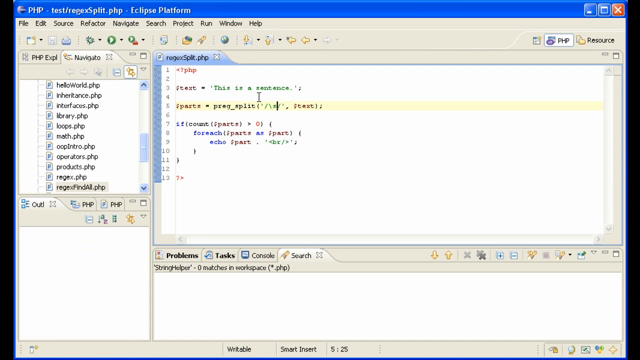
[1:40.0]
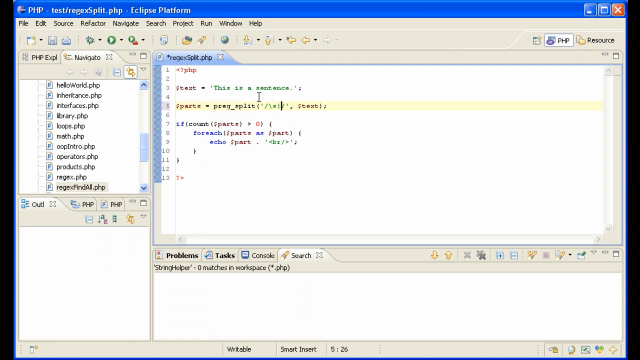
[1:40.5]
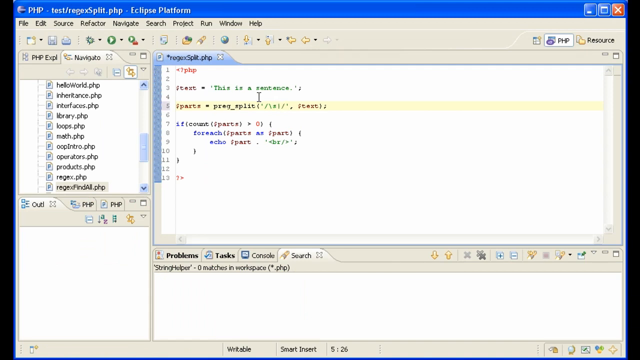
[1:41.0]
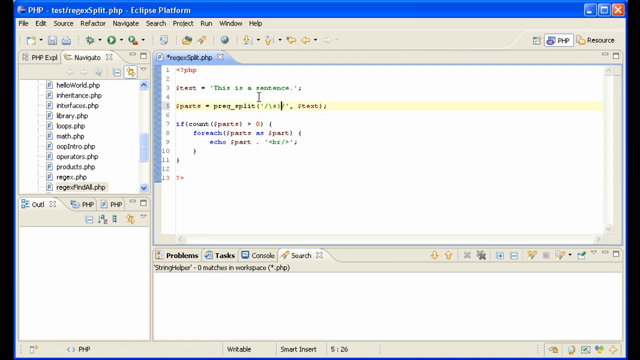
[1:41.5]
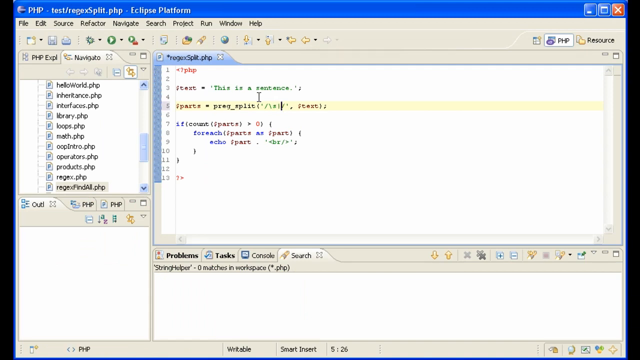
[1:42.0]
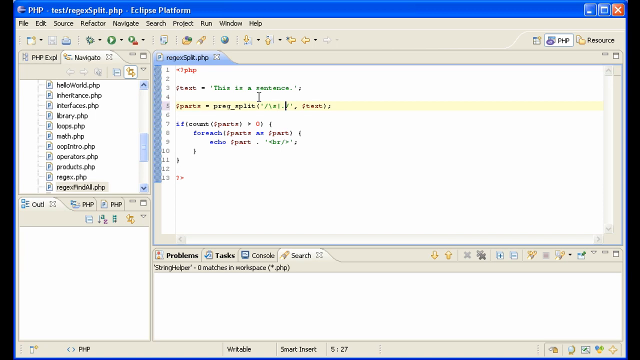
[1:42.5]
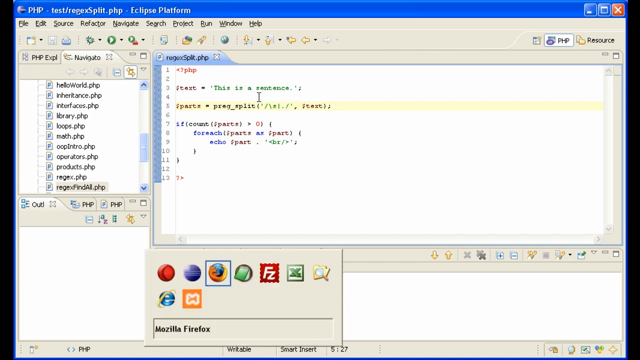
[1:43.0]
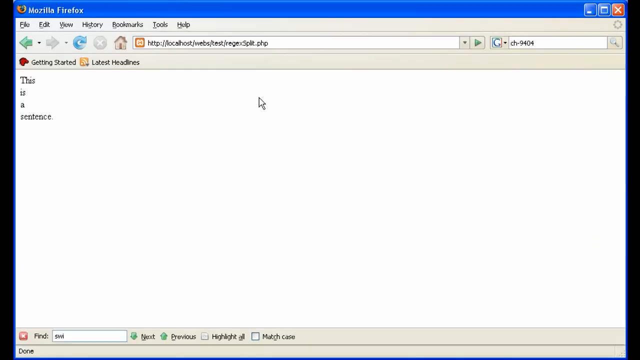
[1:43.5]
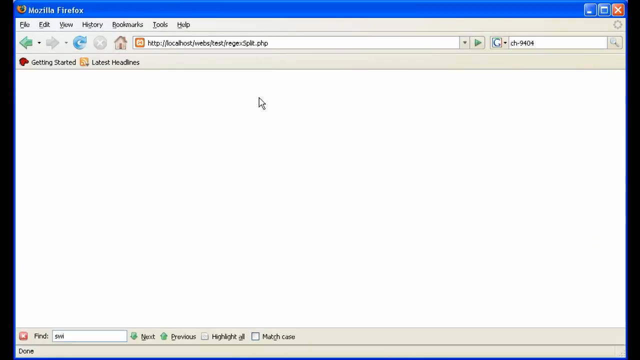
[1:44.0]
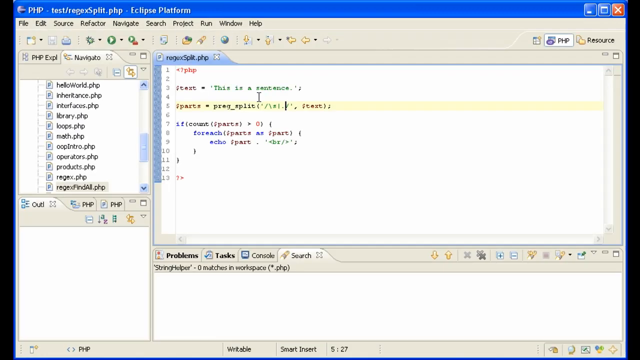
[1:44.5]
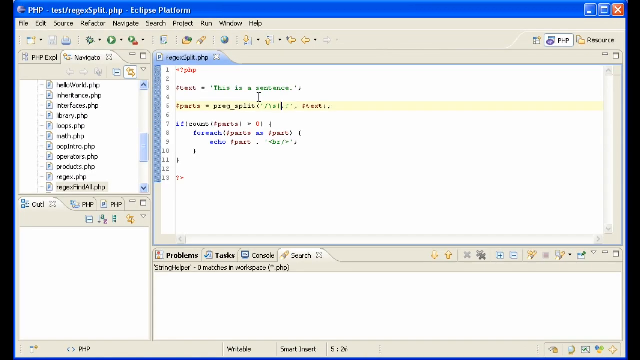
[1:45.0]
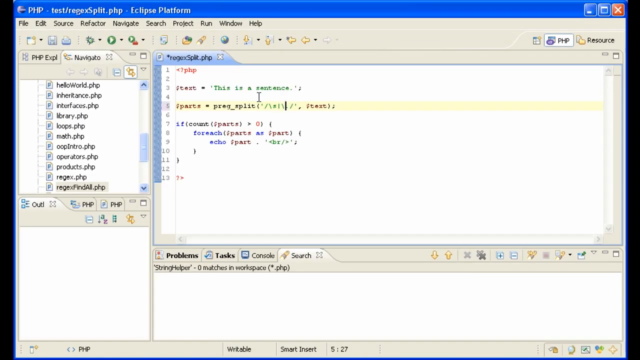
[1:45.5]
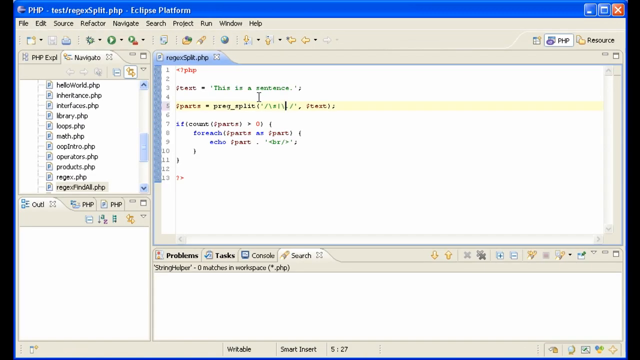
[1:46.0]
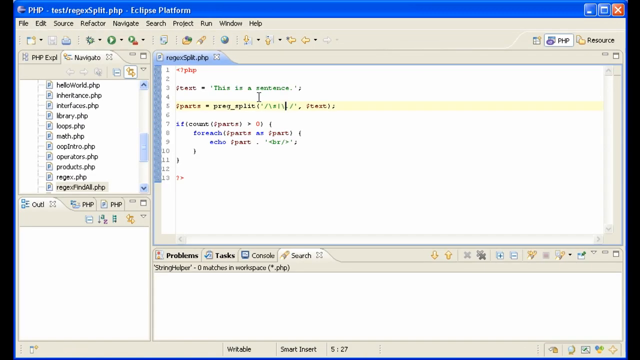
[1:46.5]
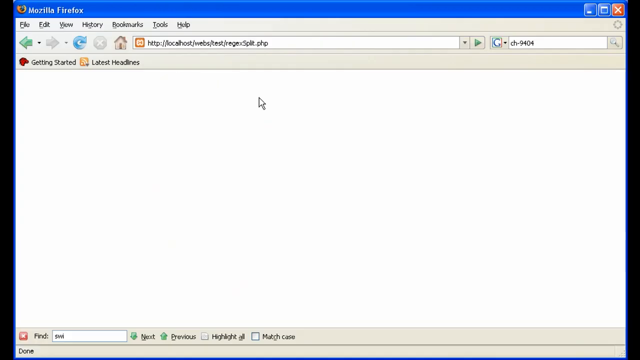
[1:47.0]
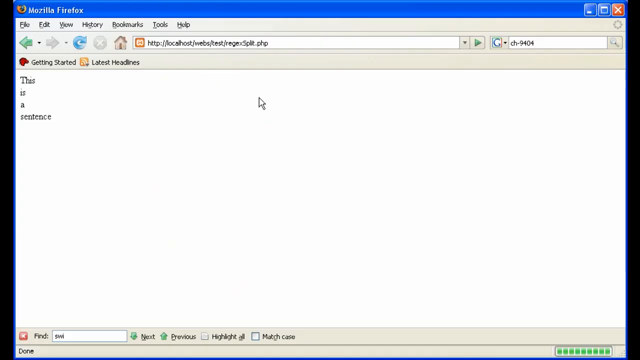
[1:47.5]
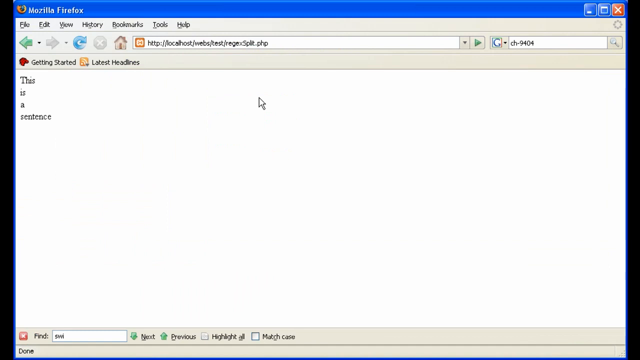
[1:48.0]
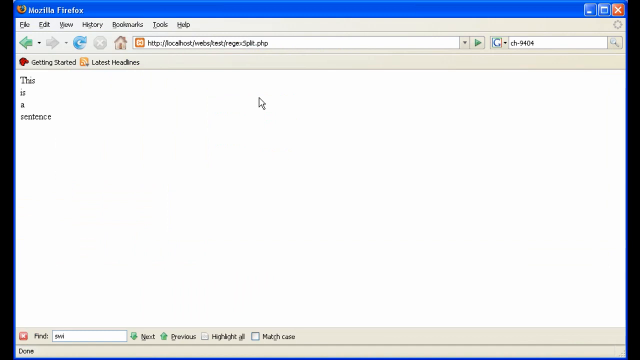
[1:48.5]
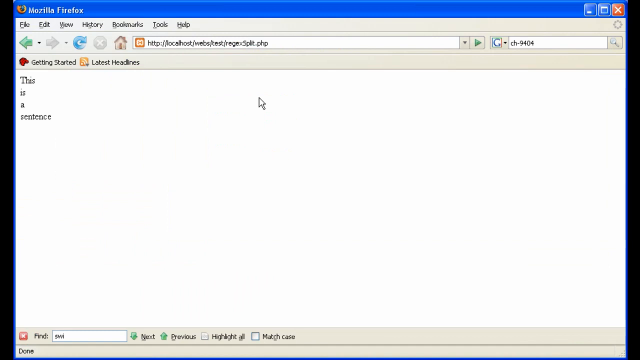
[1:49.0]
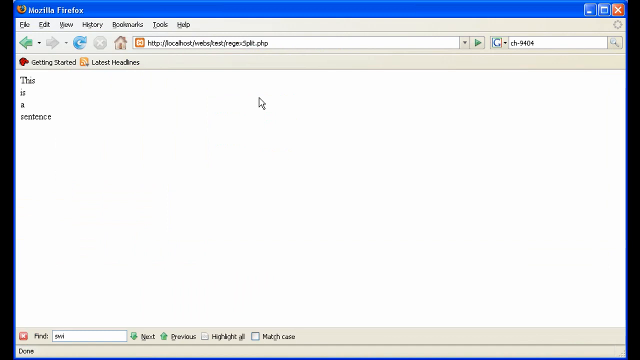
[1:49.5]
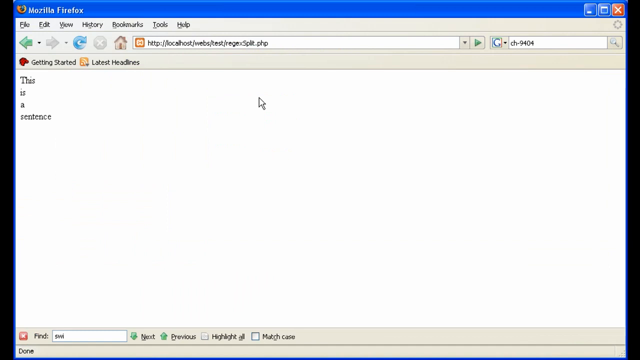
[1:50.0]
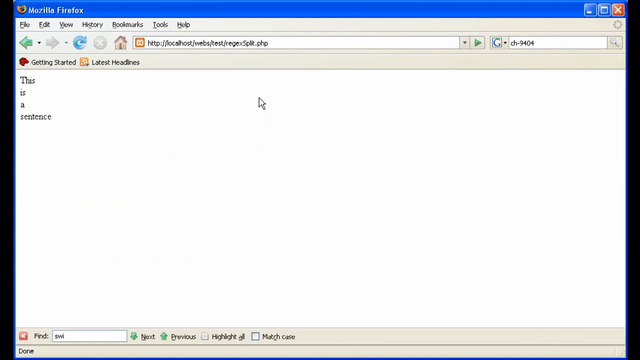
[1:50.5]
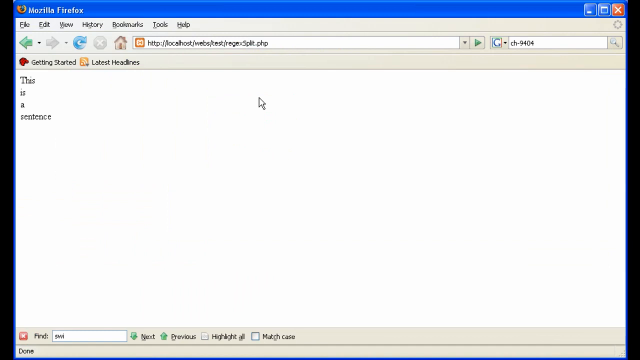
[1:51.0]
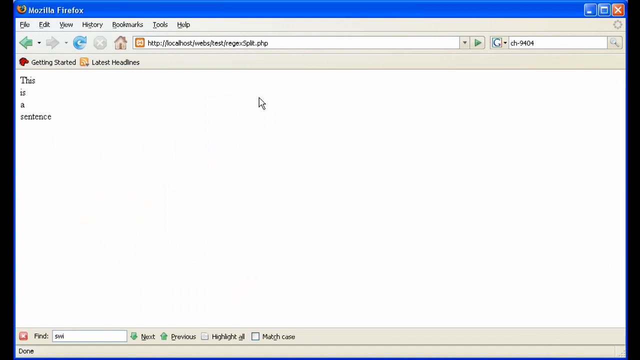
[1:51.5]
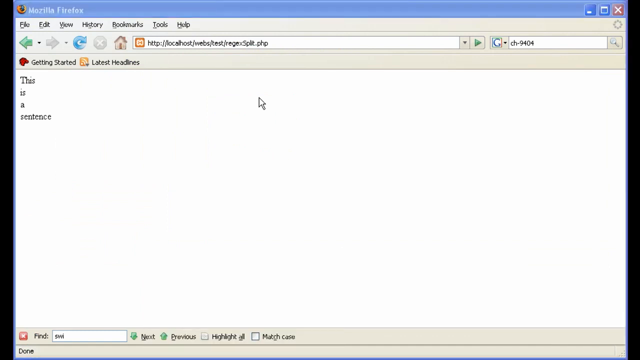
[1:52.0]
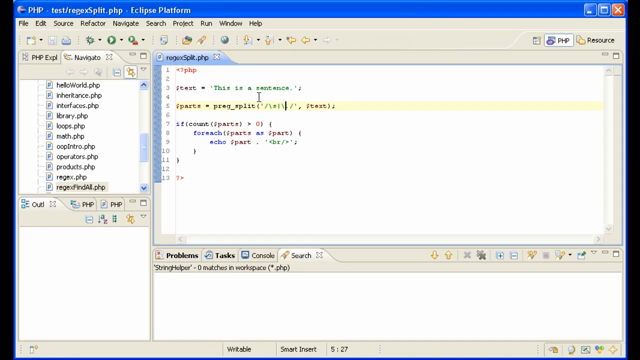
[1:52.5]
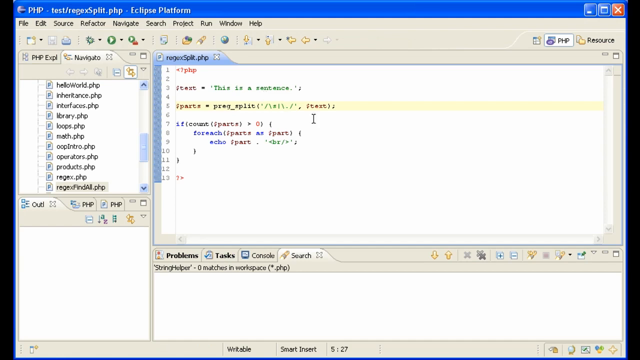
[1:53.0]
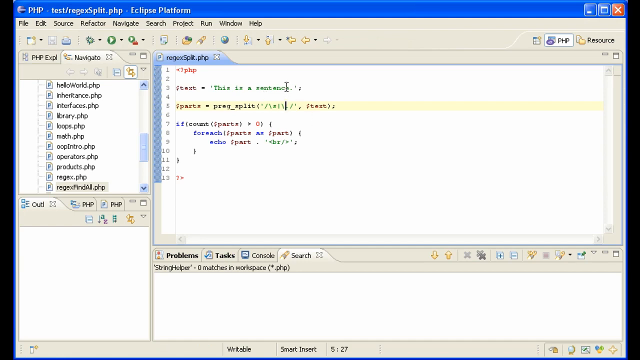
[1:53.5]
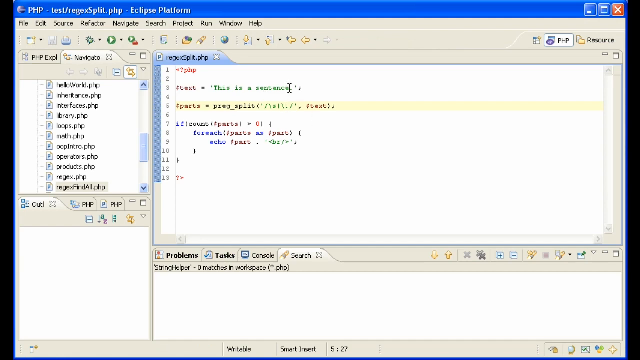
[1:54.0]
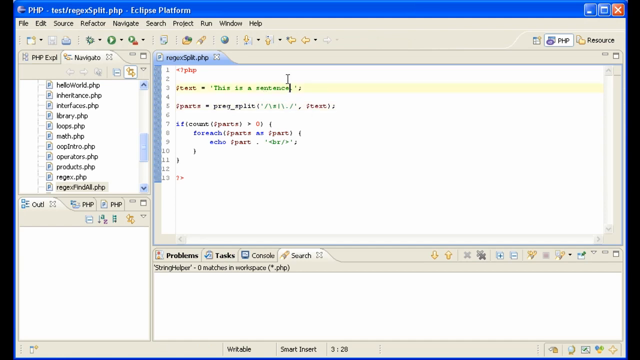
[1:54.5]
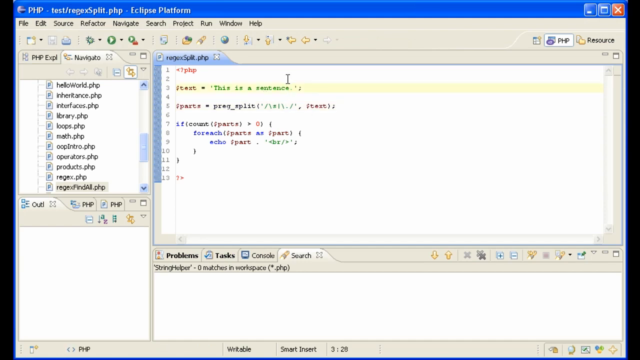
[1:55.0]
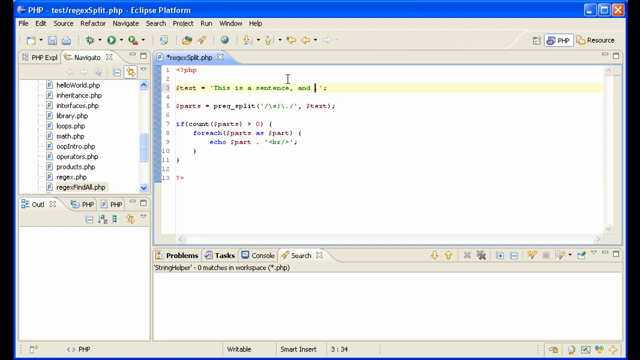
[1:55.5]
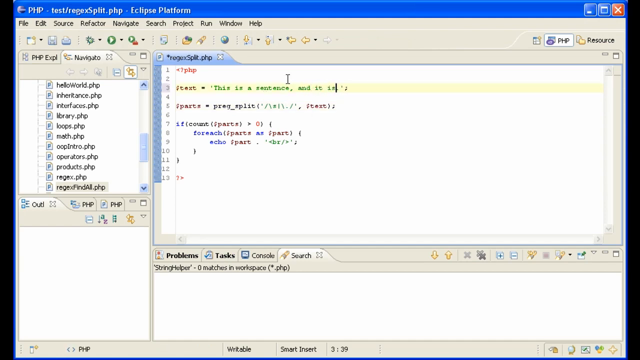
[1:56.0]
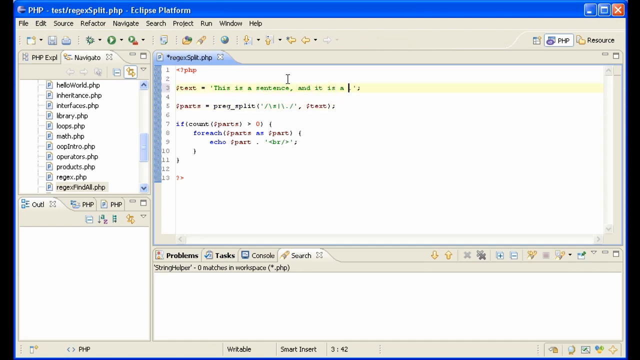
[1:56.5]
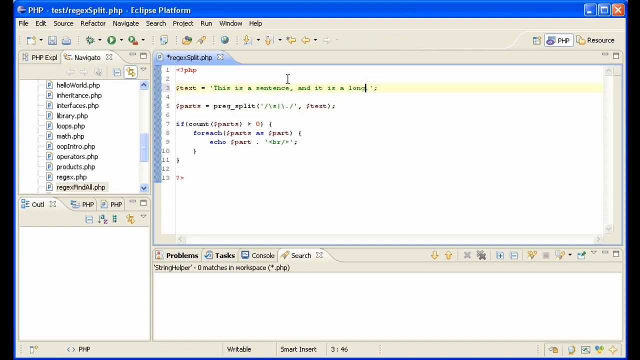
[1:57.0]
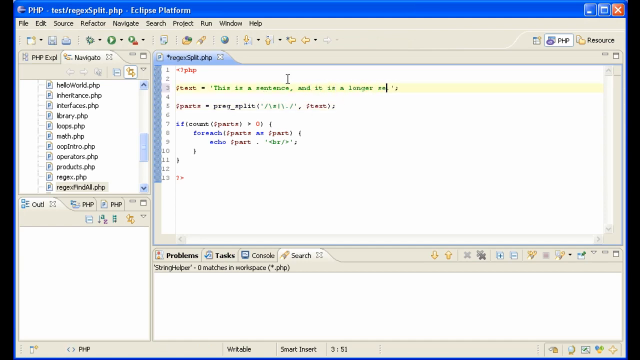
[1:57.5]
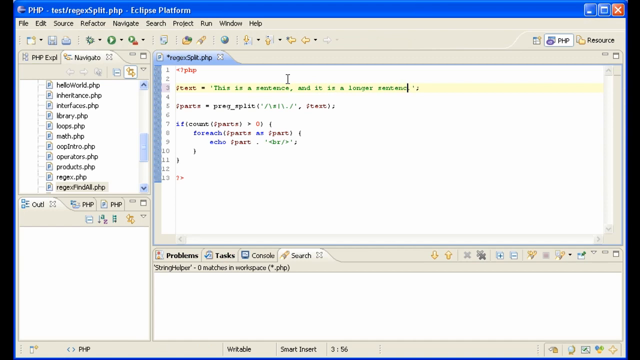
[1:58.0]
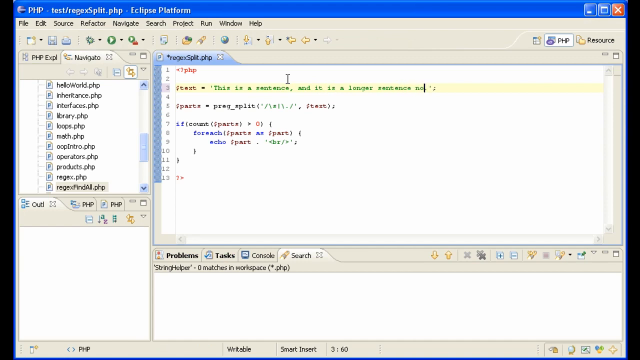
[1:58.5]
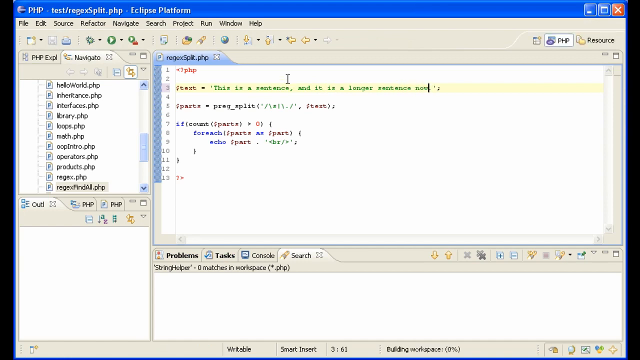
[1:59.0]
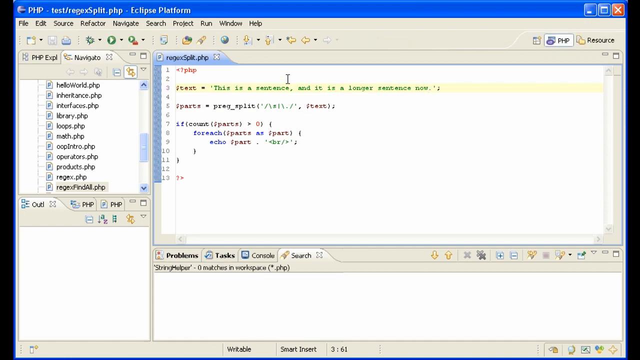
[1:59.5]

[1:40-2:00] A vertical line is typed, followed by a full stop. When the page is reloaded in Mozilla Firefox, everything disappears. A backslash is then put before the dot, the file is saved, and in Firefox the earlier output returns, with each word of the sentence on a new line. This apparently shows another regex combination that gives the same output as an empty space. More is then added to the text variable: instead of "this is a sentence.", it now reads "this is a sentence, and it is a longer sentence now".